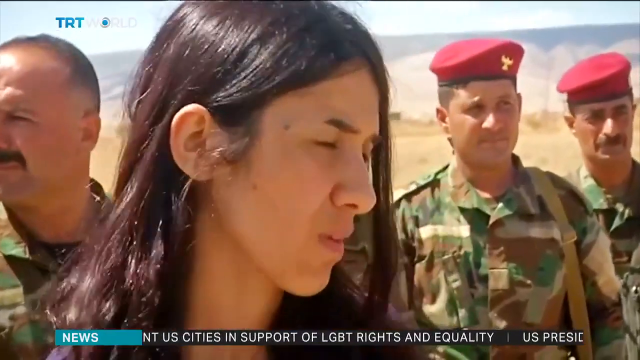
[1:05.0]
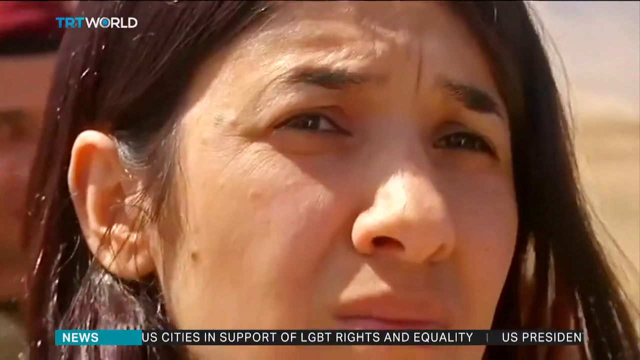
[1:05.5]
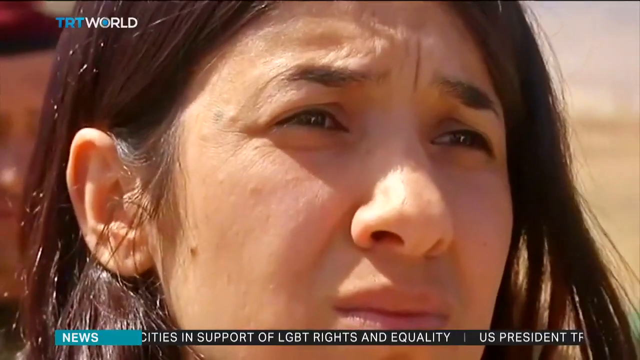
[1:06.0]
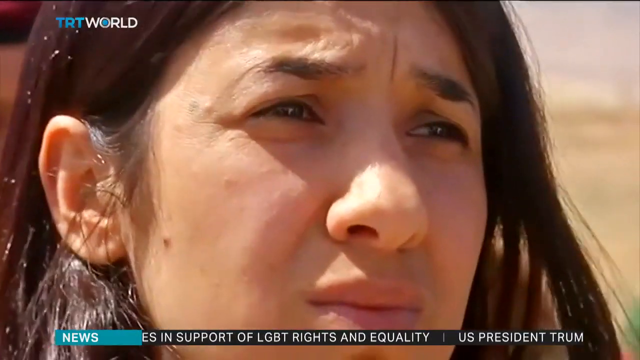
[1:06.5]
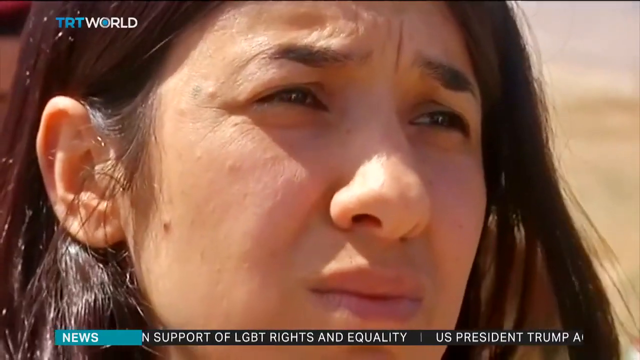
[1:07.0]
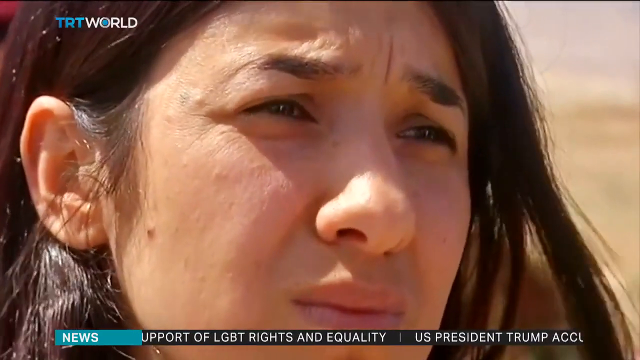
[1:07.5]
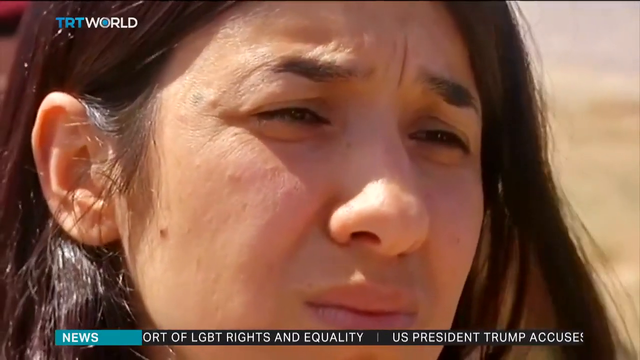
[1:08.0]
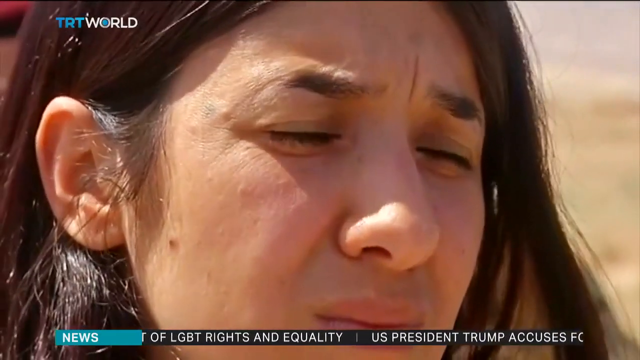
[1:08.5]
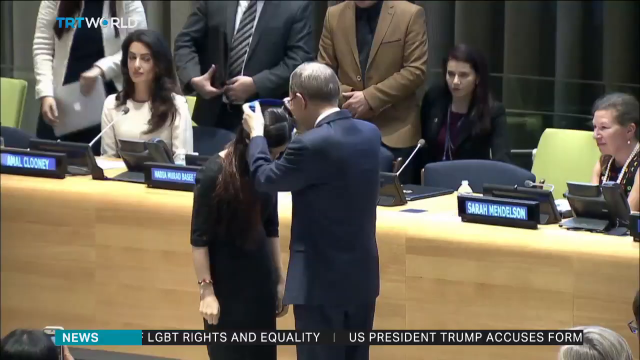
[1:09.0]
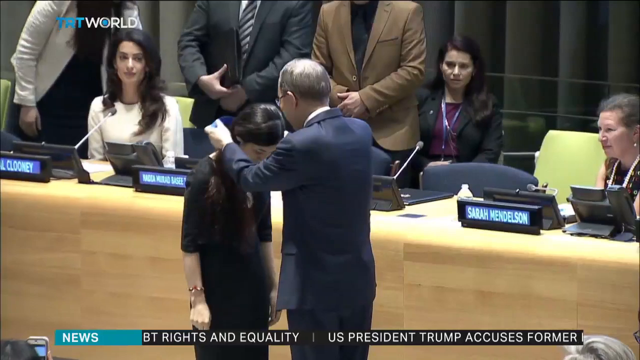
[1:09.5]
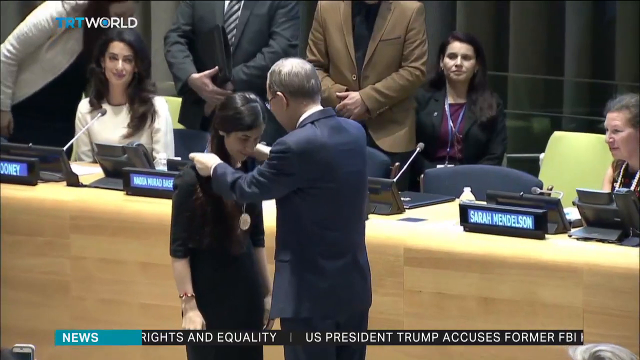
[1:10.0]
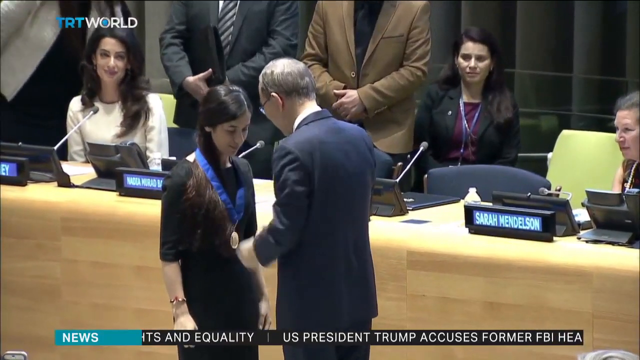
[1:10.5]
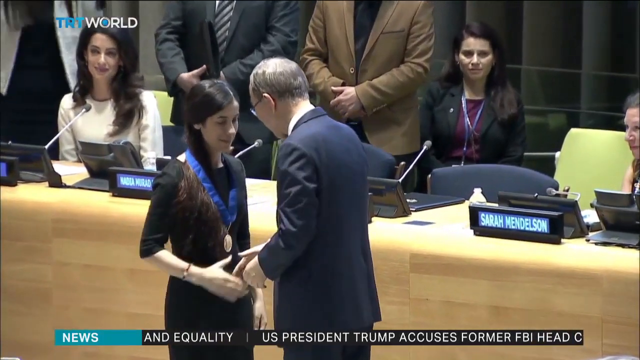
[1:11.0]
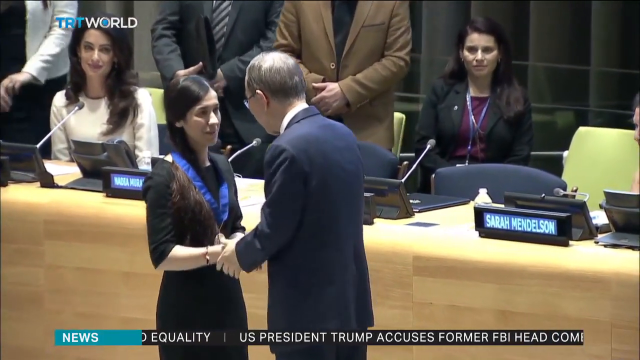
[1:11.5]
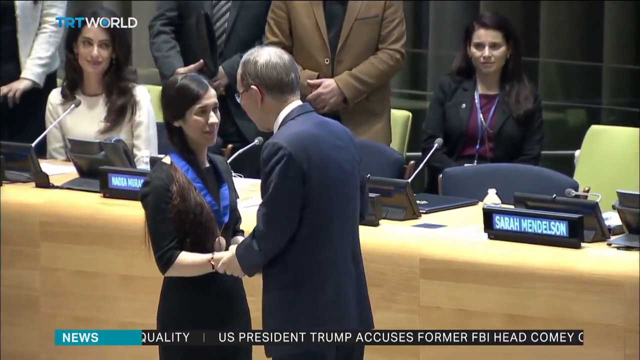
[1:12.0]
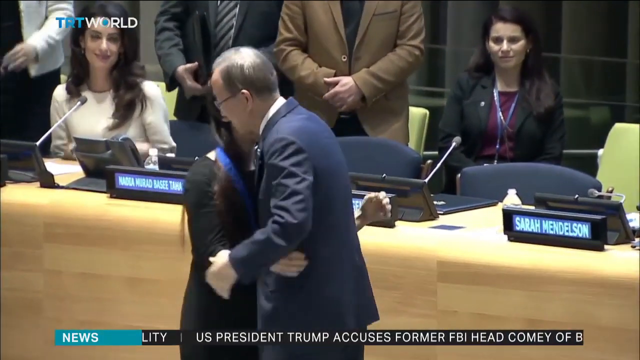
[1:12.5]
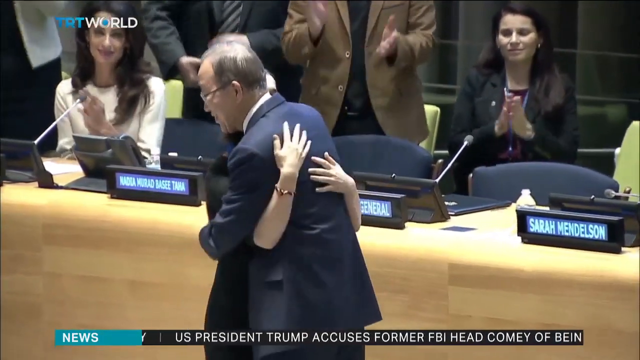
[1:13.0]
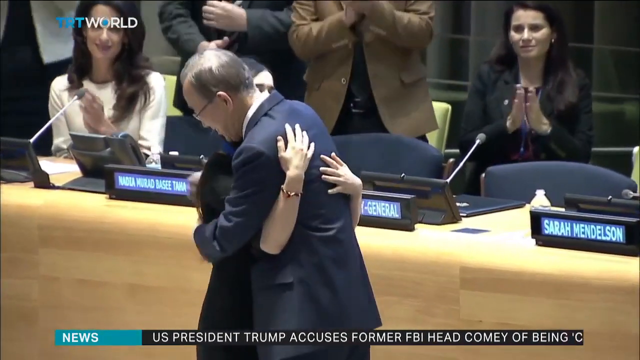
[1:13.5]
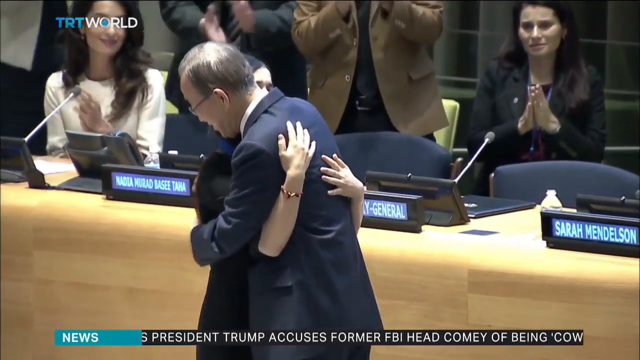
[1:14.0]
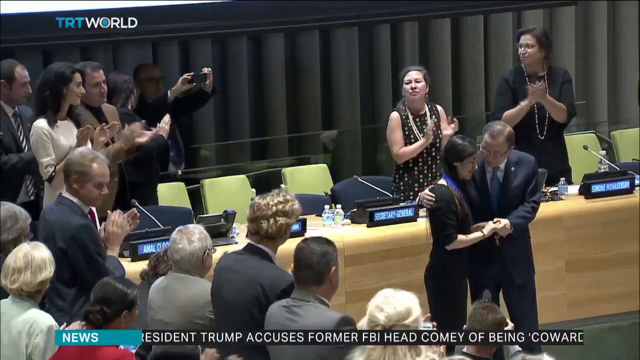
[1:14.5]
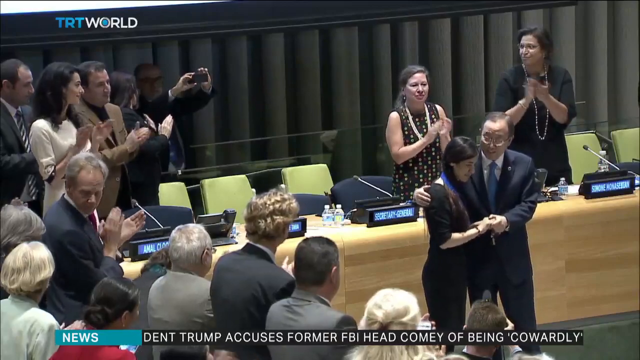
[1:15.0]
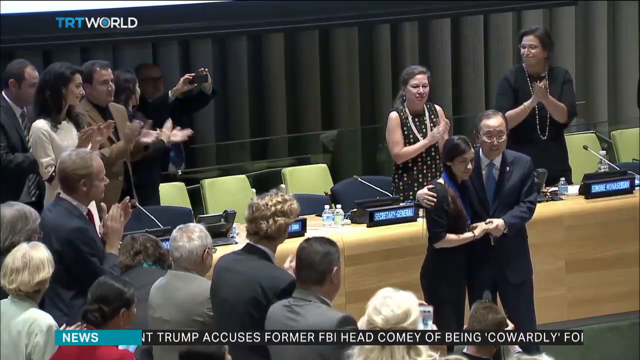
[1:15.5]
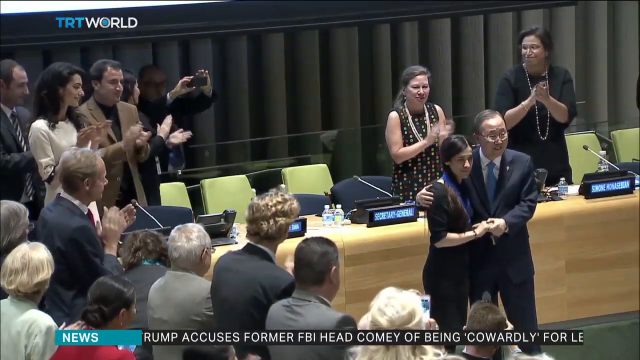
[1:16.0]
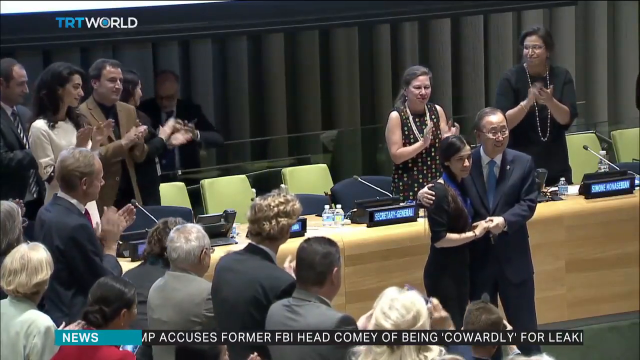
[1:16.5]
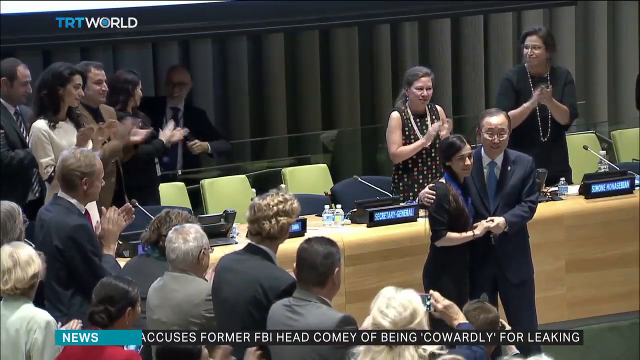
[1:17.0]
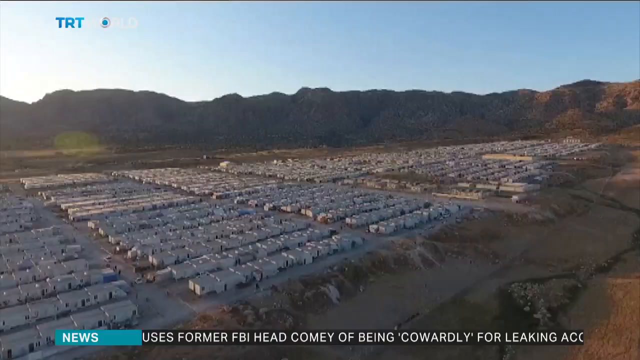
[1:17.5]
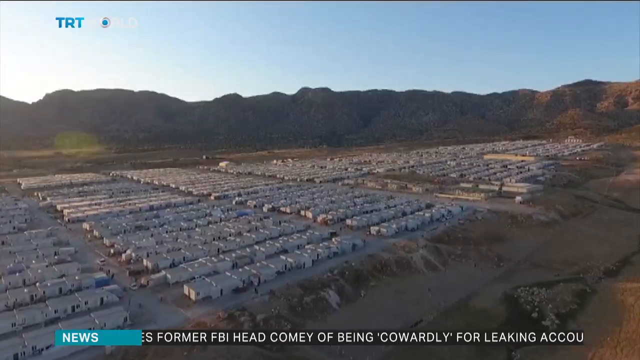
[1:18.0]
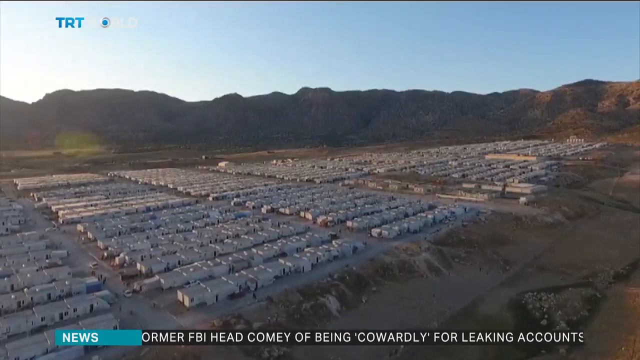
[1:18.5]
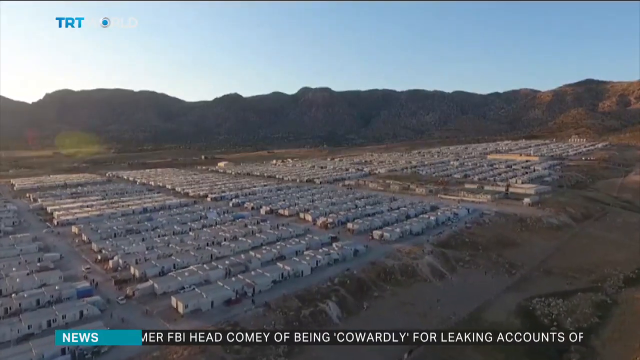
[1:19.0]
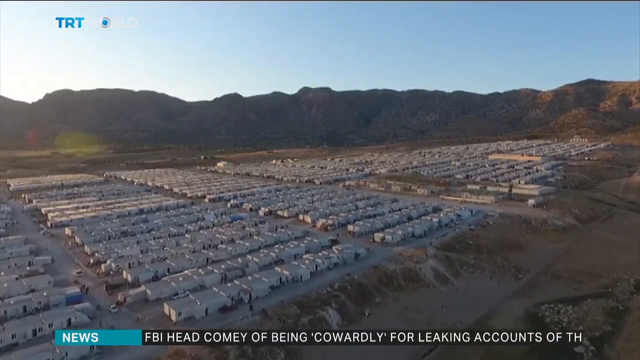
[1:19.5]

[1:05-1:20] The formerly enslaved woman, with dark hair and dark eyes that look very sad, is receiving a medal. A man with dark hair, wearing a blue suit, a crisp white button-down shirt and a blue tie, hugs her and holds her around her waist. As he hugs her, everyone stands in a standing ovation and claps for her. She still appears weak and distraught. Next comes what appears to be a desert, with what appear to be mountains in the background and barren land in the foreground; the land all looks brown. Then mountains or a hillside appear in the background, with some sort of white individual containments in the foreground.